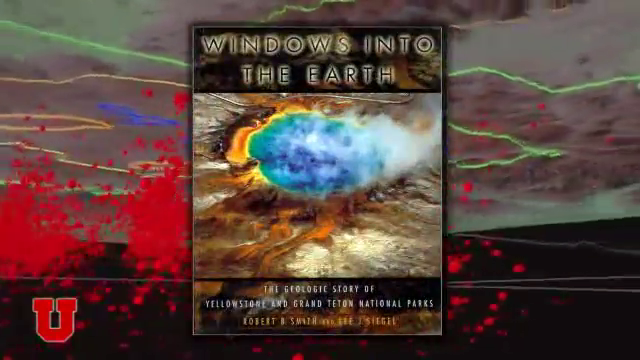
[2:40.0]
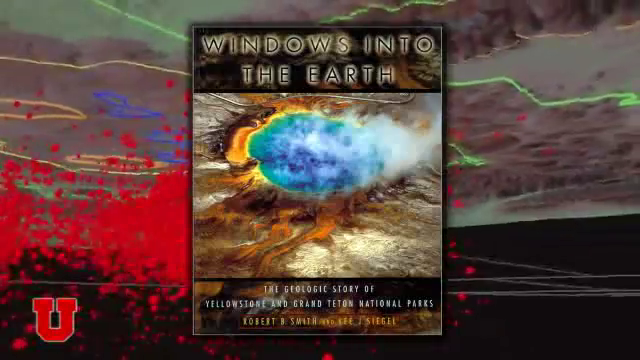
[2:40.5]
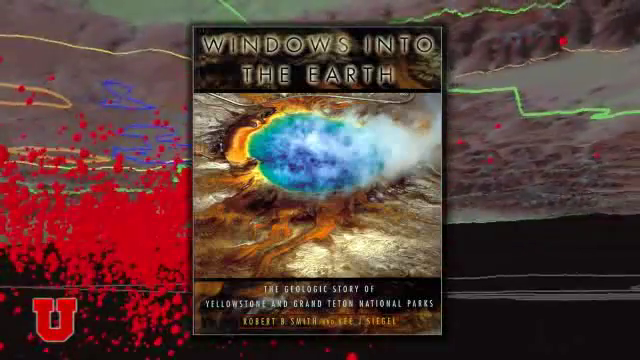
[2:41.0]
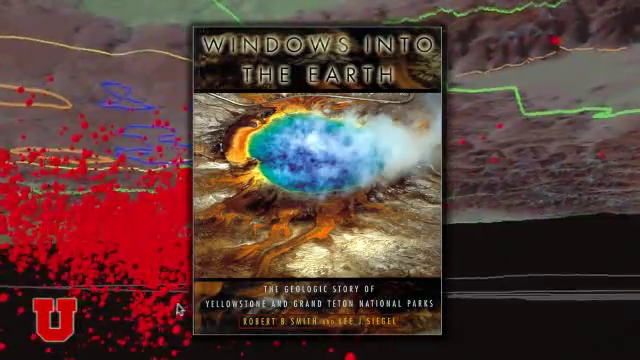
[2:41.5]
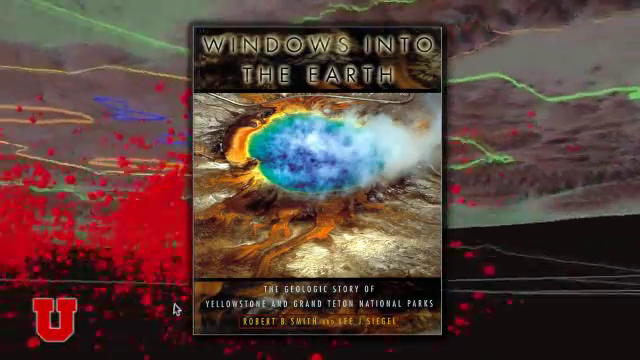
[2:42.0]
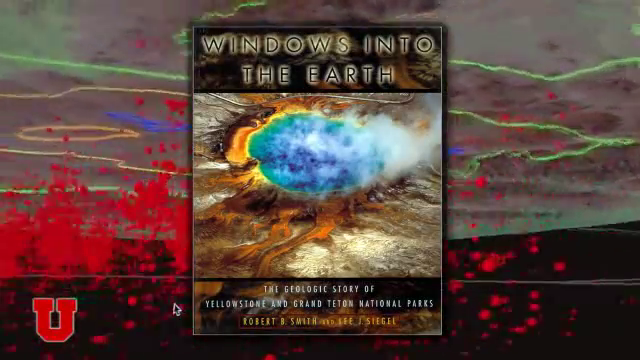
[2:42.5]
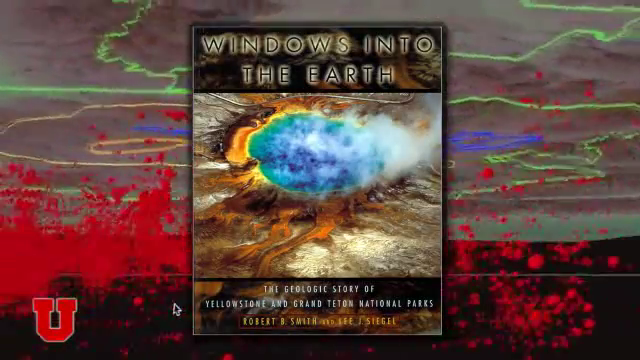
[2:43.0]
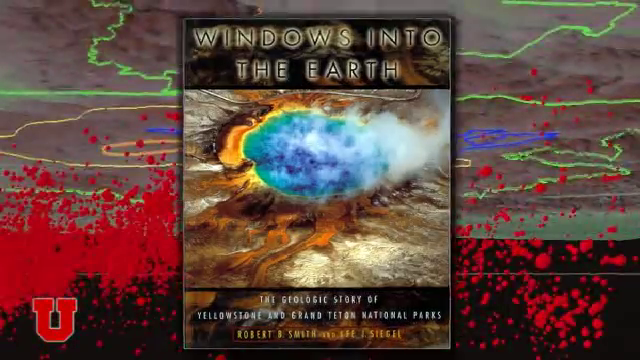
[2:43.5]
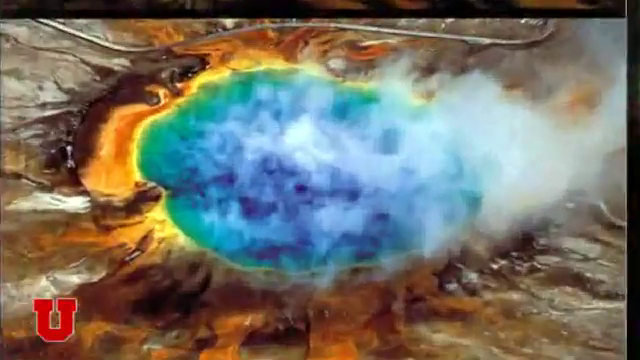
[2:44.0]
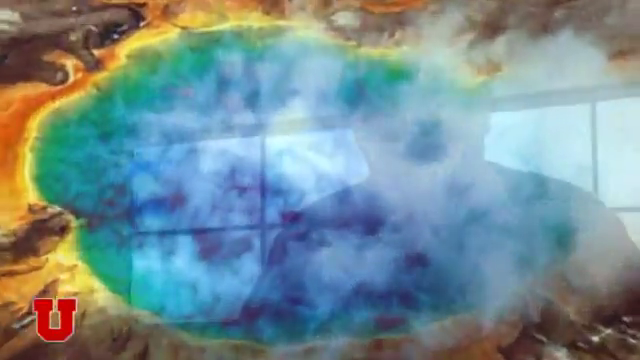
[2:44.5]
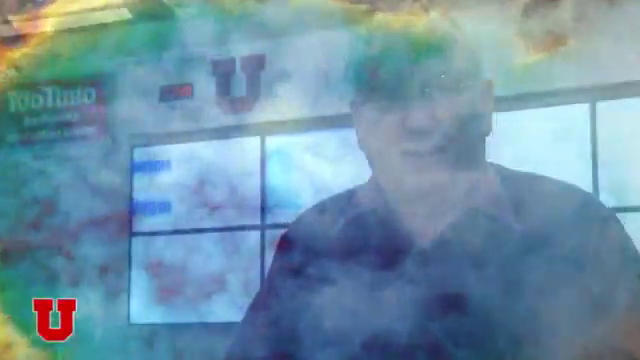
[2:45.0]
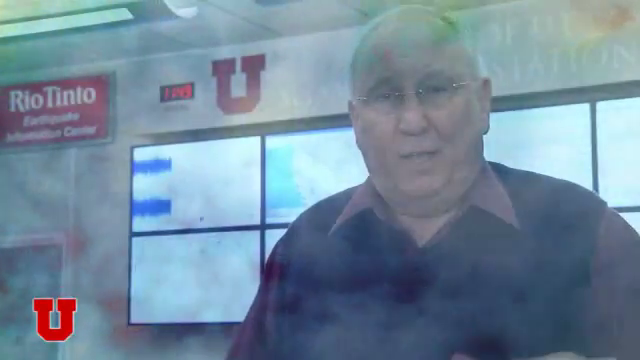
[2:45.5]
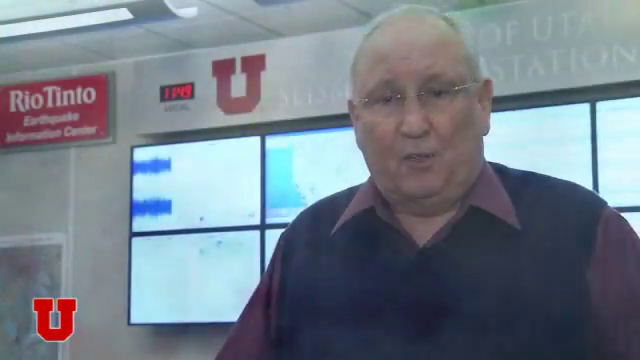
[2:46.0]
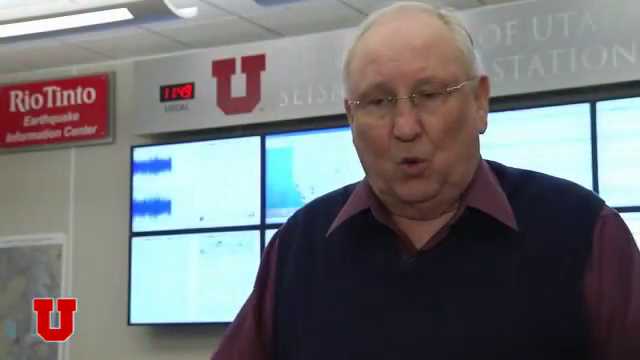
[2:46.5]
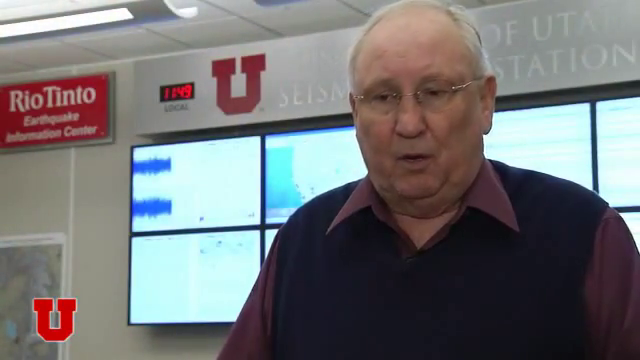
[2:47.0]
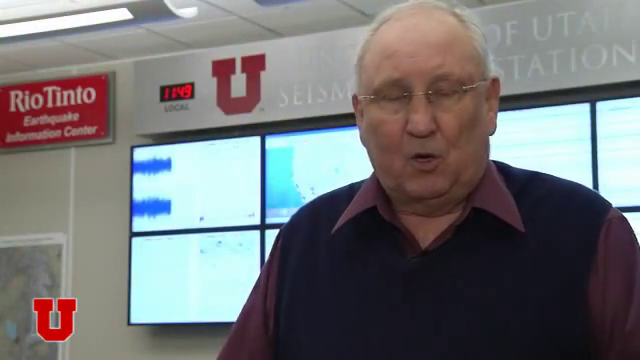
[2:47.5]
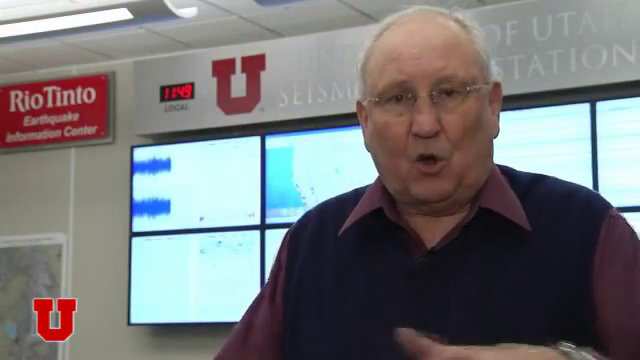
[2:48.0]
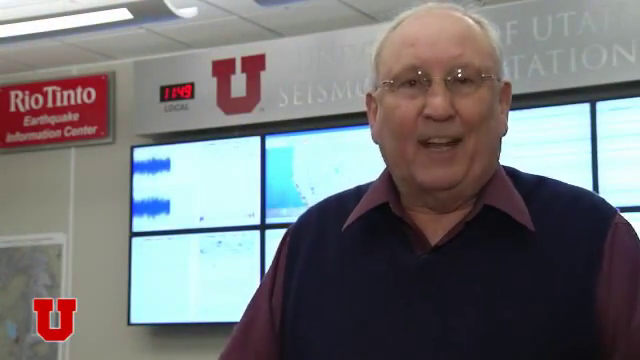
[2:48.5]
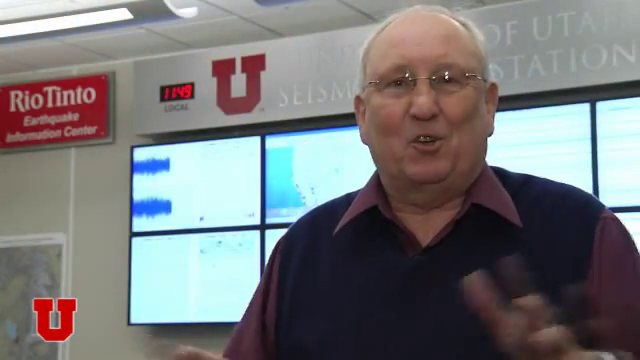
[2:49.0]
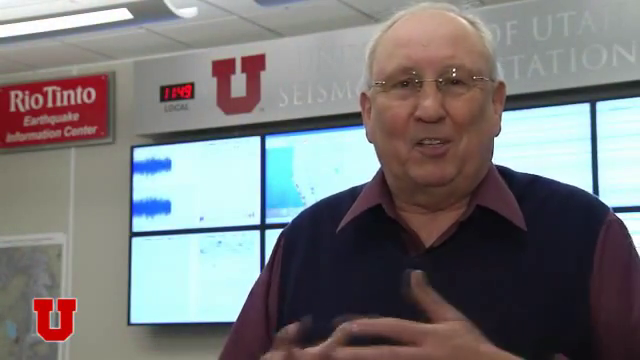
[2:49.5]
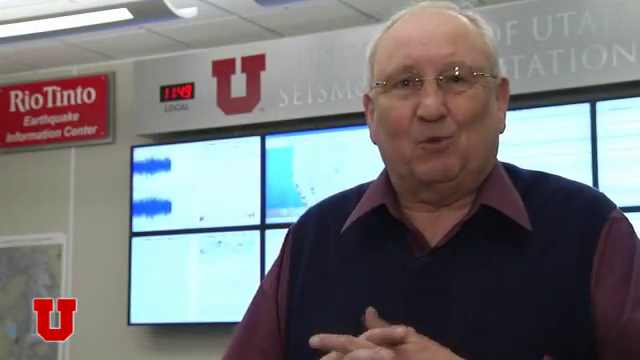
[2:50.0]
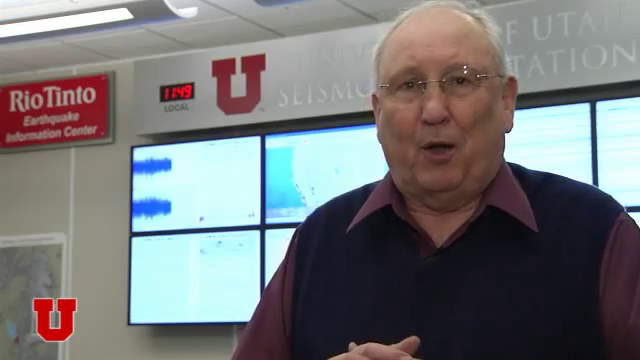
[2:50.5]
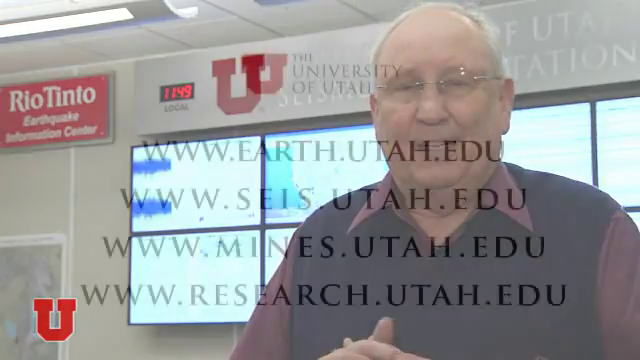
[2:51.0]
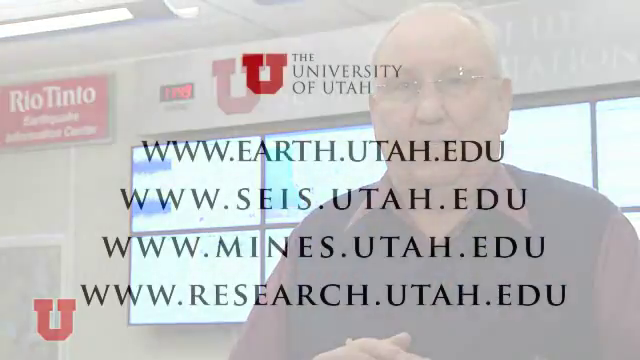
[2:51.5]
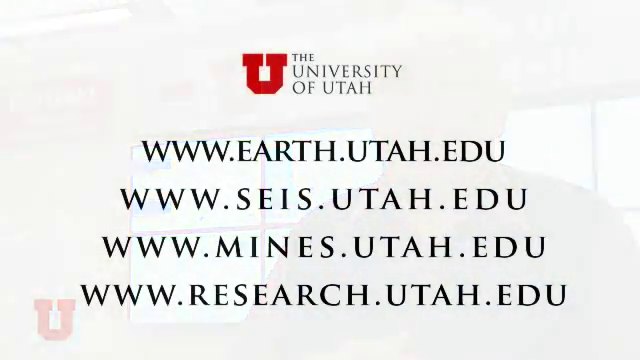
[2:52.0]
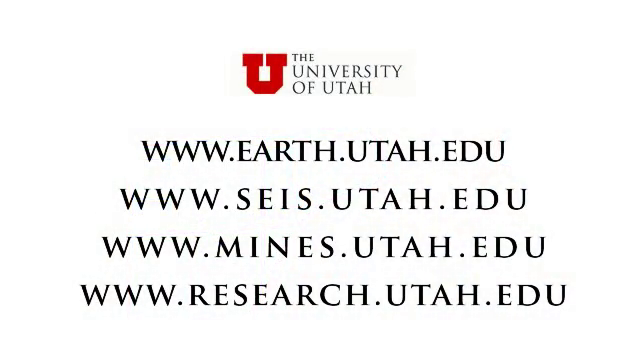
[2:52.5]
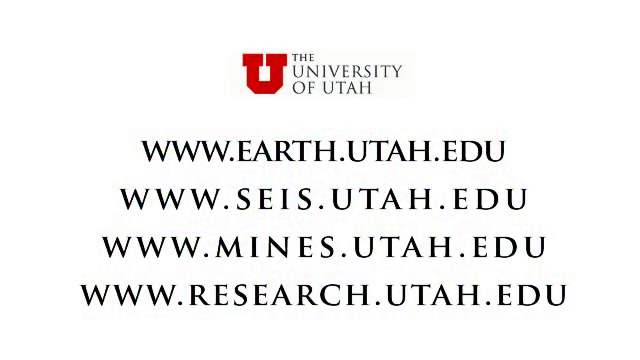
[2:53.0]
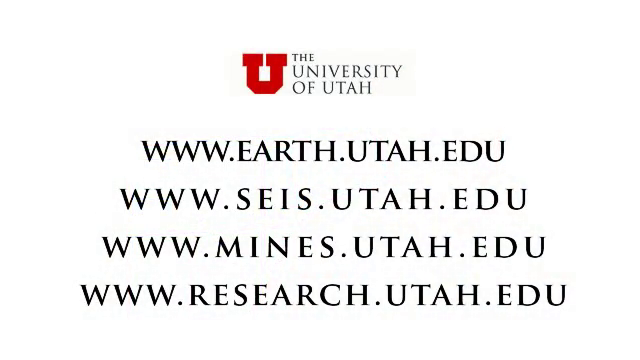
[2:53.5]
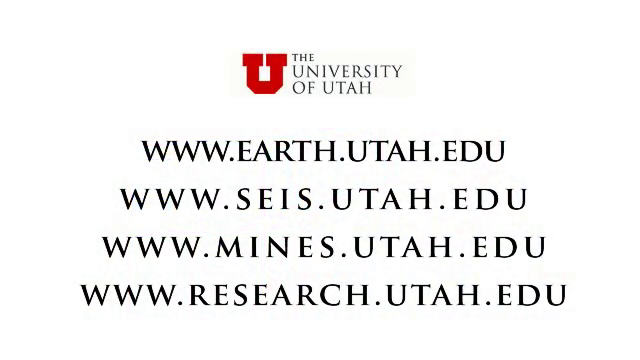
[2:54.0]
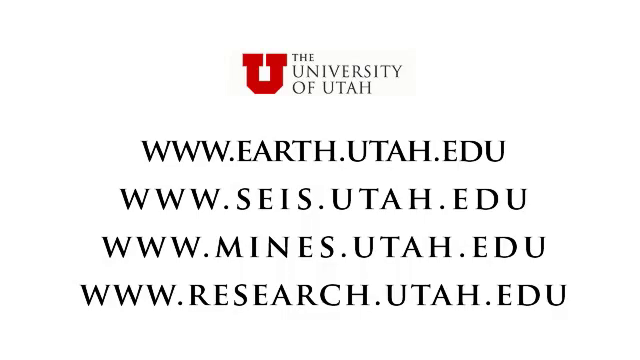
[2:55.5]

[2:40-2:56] A picture of the earth appears very briefly, followed by Mr. Smith. Then sources for the University of Utah are listed: "www.earth.utah.edu," "www.seis.utah.edu," "www.mines.utah.edu" and "www.research.utah.edu."